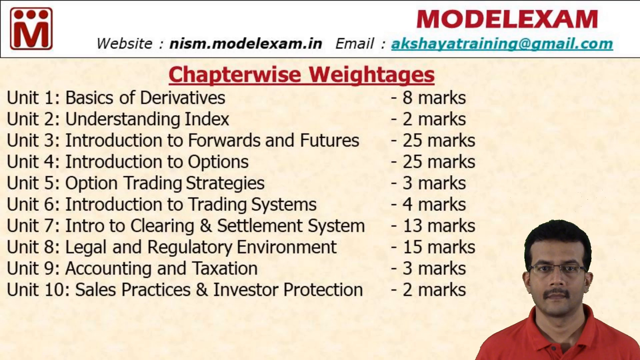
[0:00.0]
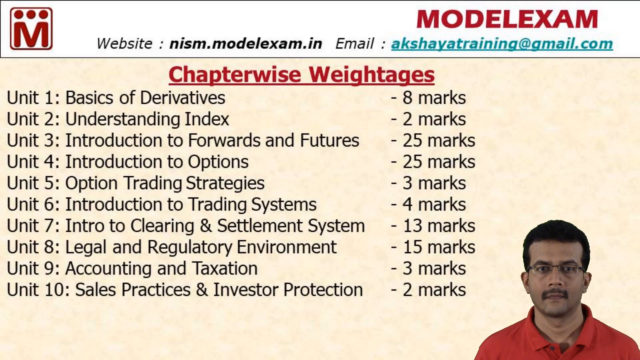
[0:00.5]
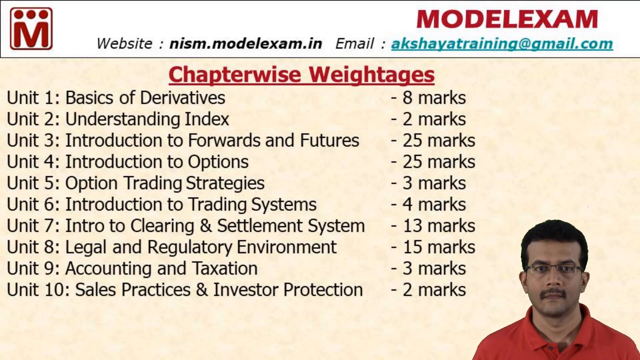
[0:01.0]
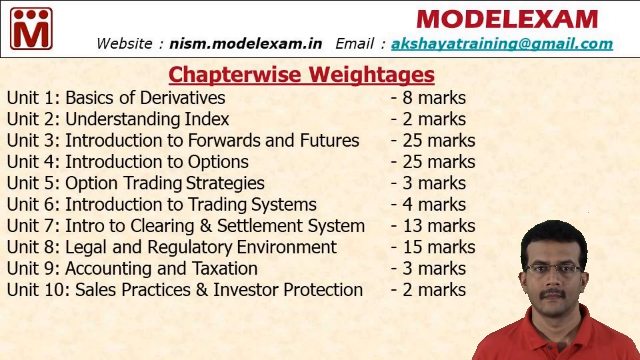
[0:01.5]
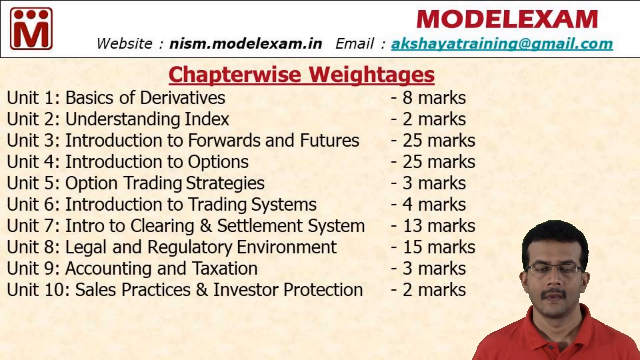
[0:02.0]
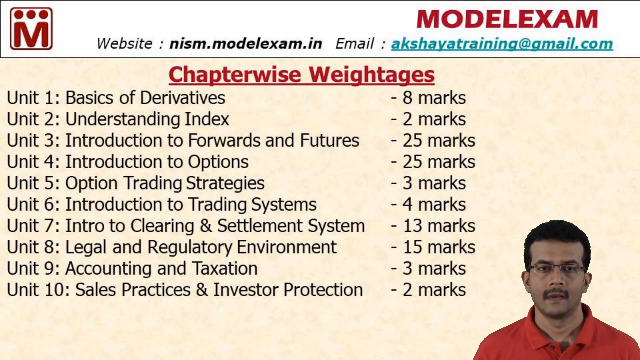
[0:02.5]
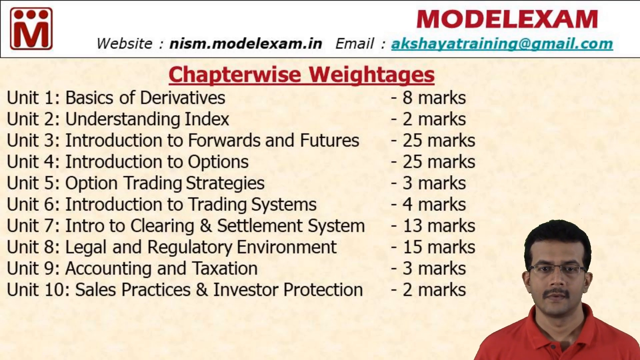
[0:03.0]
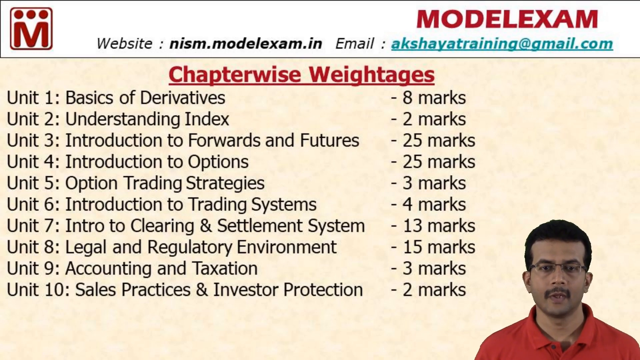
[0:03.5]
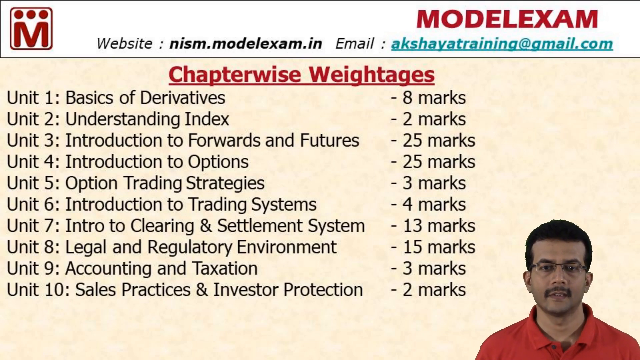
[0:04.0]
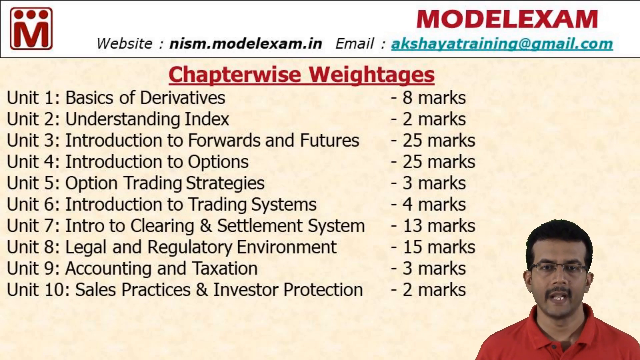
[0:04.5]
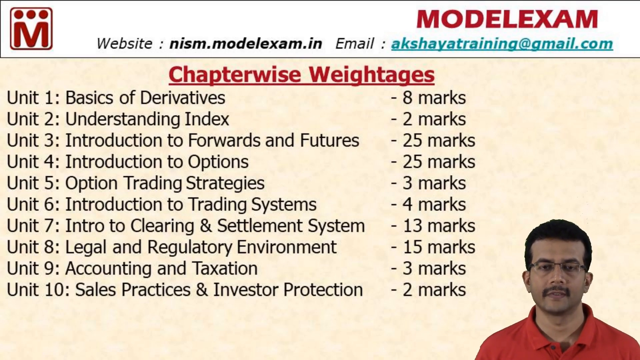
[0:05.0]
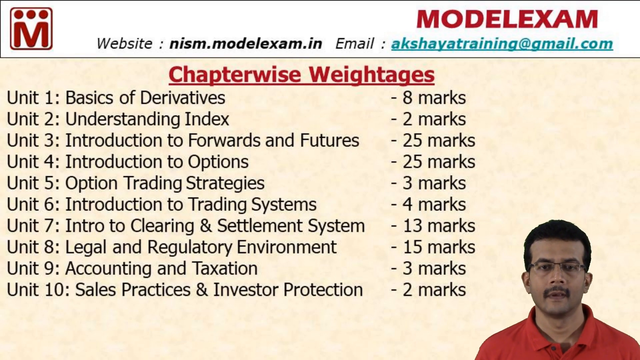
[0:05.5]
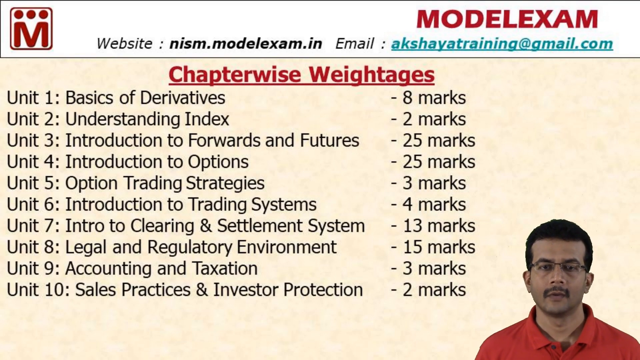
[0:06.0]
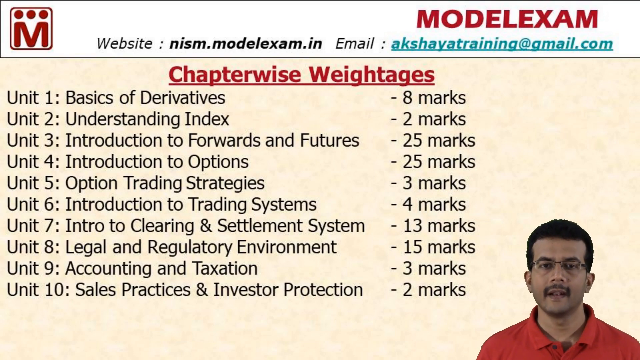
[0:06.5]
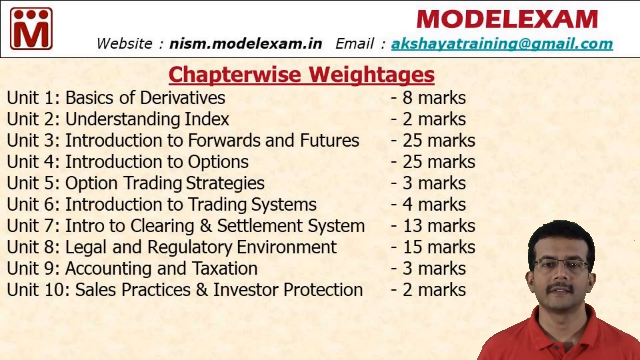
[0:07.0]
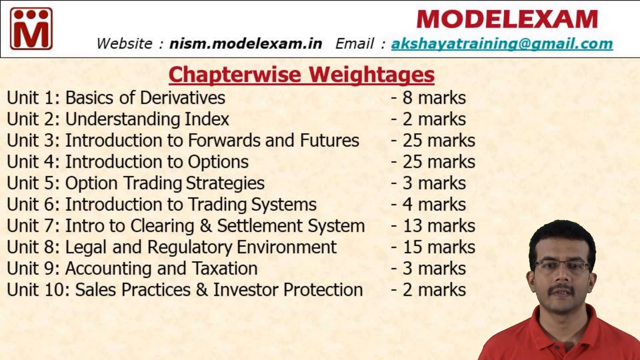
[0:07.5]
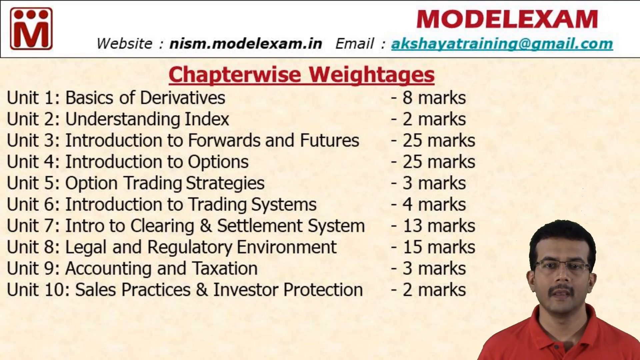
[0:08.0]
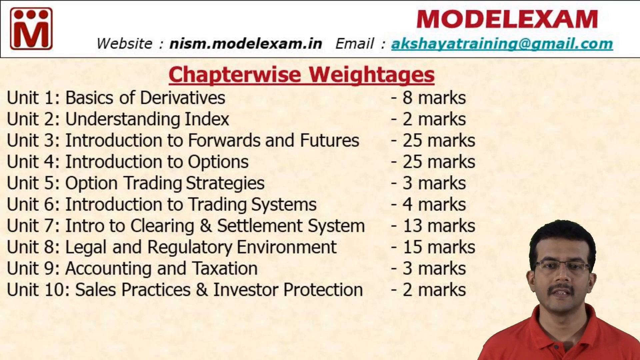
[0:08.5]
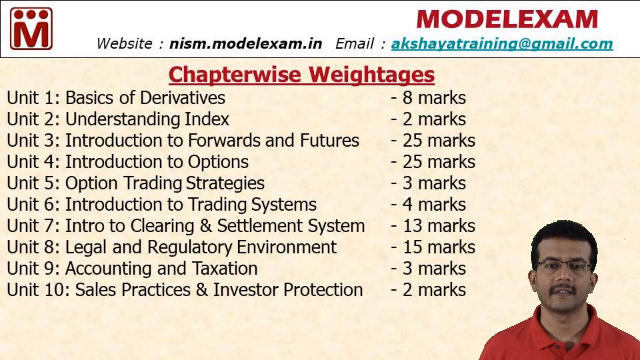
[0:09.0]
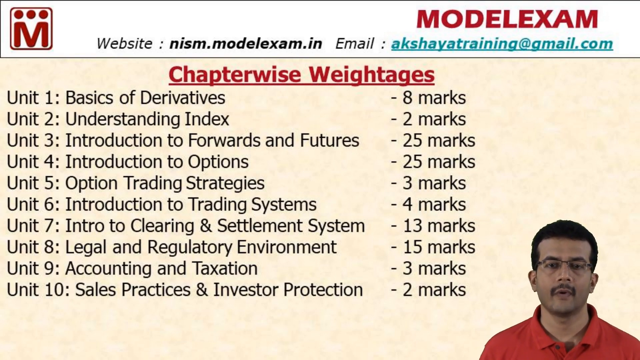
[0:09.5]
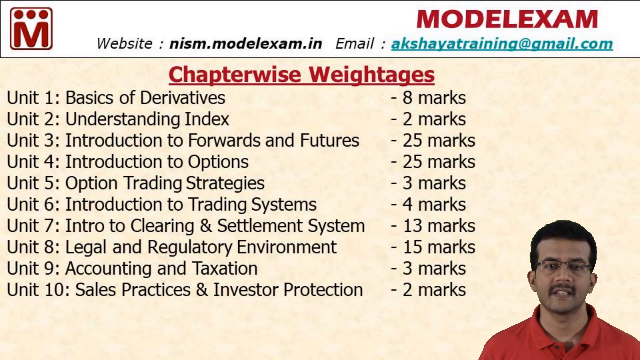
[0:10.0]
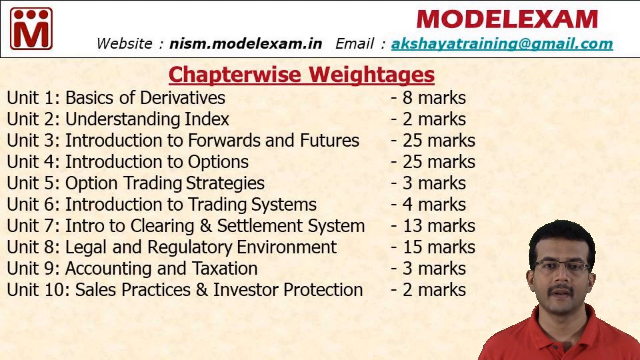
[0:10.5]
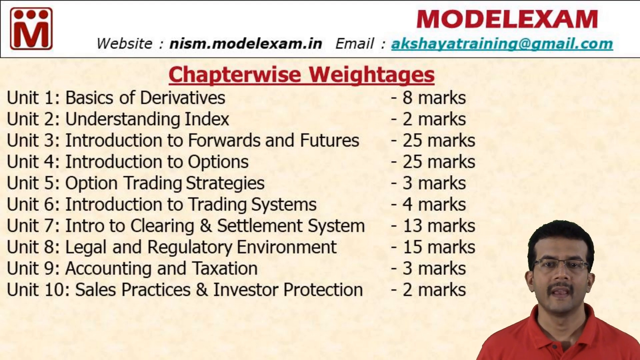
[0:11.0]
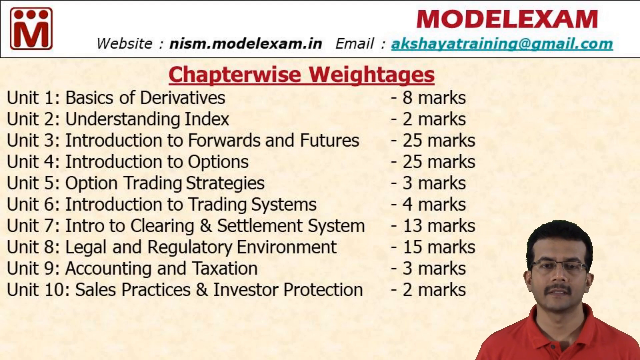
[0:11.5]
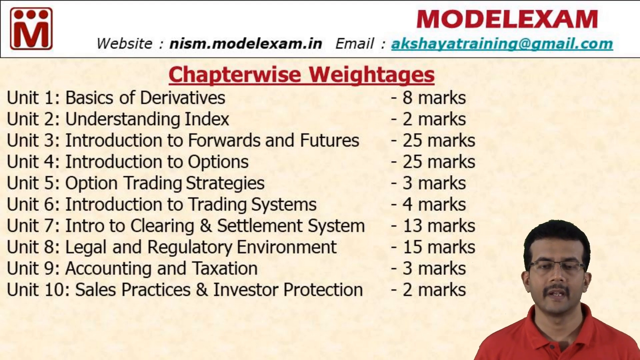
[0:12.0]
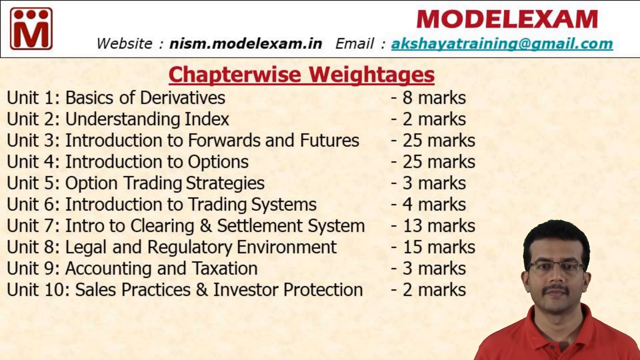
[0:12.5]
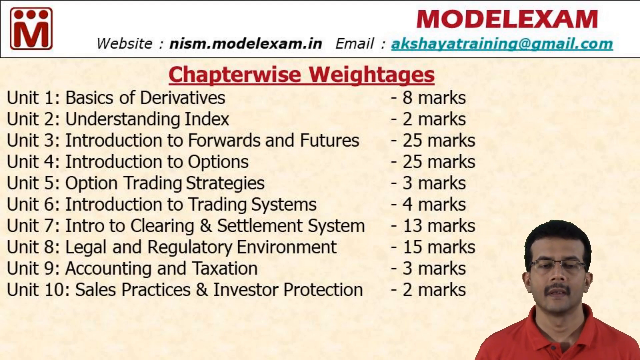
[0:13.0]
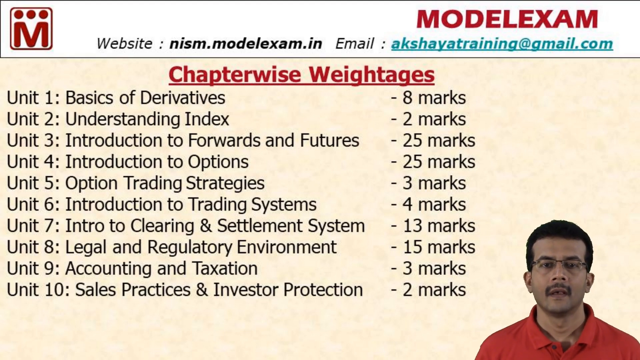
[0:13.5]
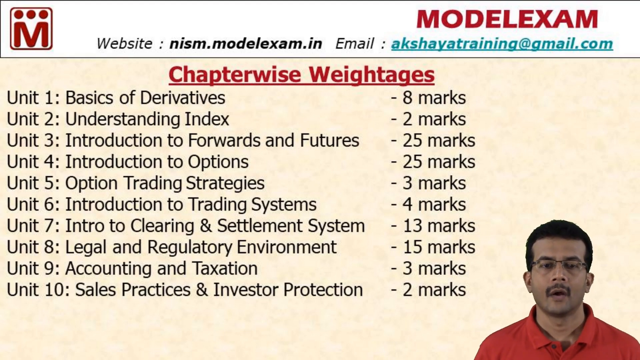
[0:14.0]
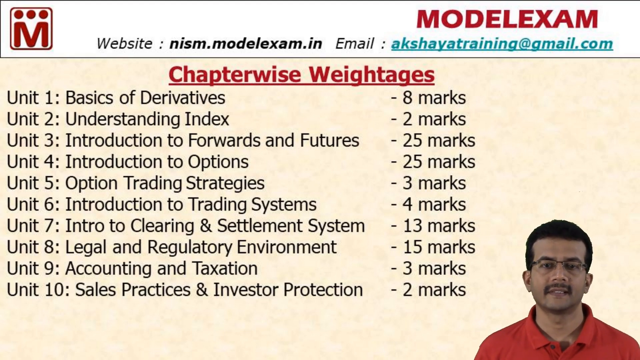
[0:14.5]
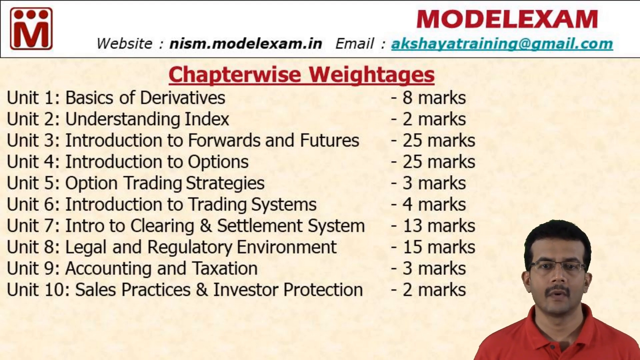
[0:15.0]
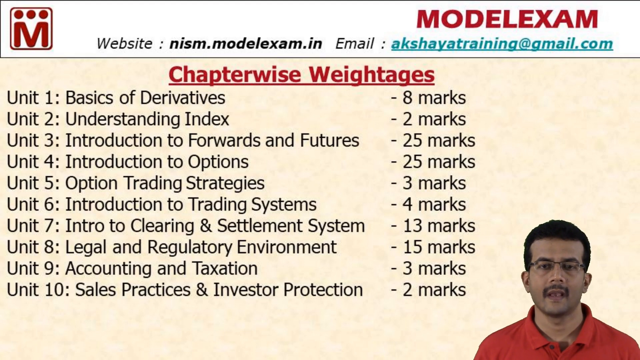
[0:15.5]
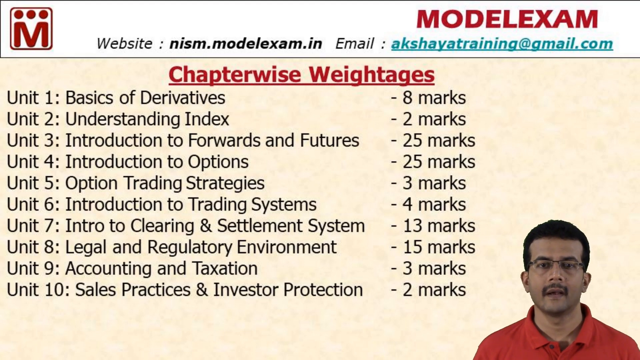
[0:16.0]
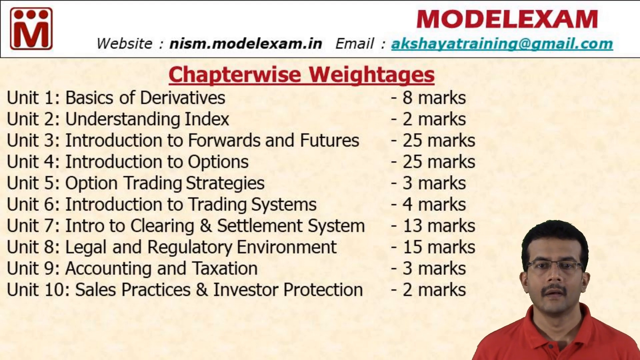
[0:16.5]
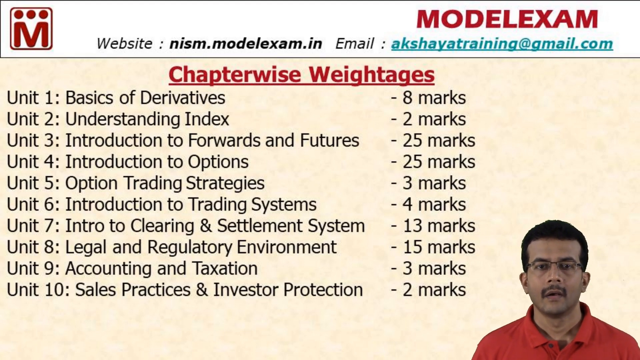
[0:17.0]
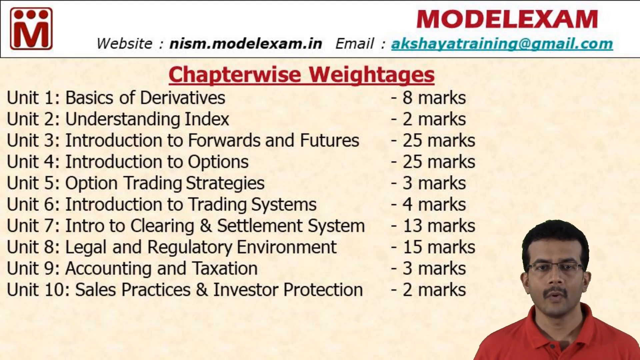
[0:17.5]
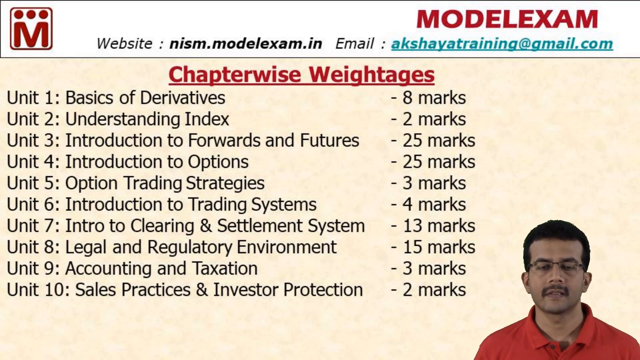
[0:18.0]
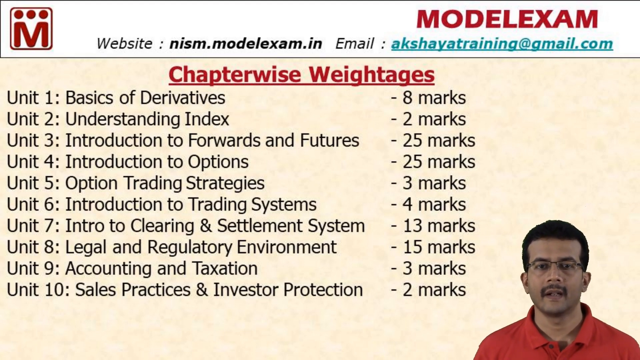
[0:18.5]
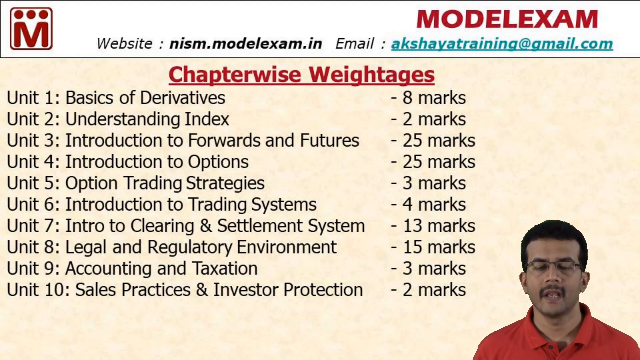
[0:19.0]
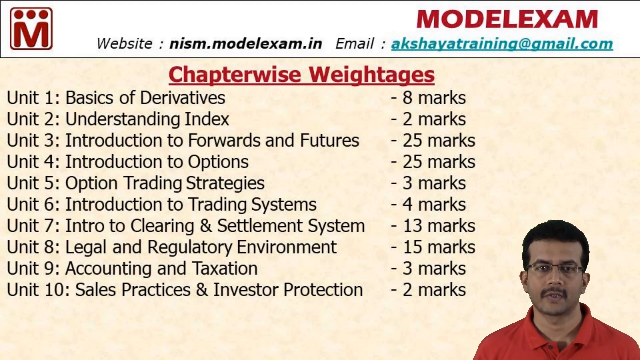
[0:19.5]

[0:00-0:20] The screen shows a table of contents listing chapters. In the top right corner it says "model exam", along with some website information and some email information. In the top left corner there appears to be a logo: an M with three evenly spaced red dots on top of it, with a square around these shapes. Below that is a very light, speckled, pale orange background, and on top of it is a list of units headed "chapter wise weight ages". The list runs from unit one through ten, each entry reading "unit one:" followed by its title, with the number of marks for that unit on the right-hand side. In the bottom right corner of the frame is a man wearing glasses, with black, short-cropped hair and a black mustache. He appears to be wearing a red shirt with a collar that is slid down. Only his shoulders and up are visible. He appears to look toward the camera and speak directly to it, and he seems to have a neutral expression.